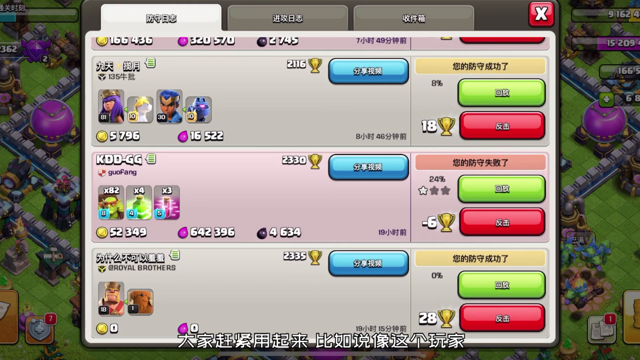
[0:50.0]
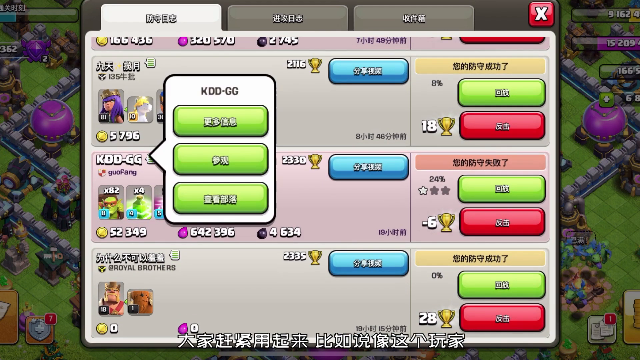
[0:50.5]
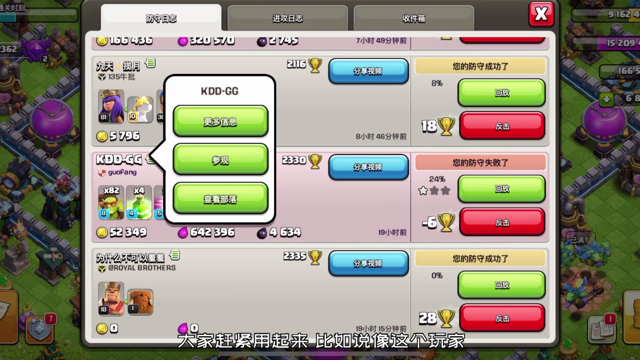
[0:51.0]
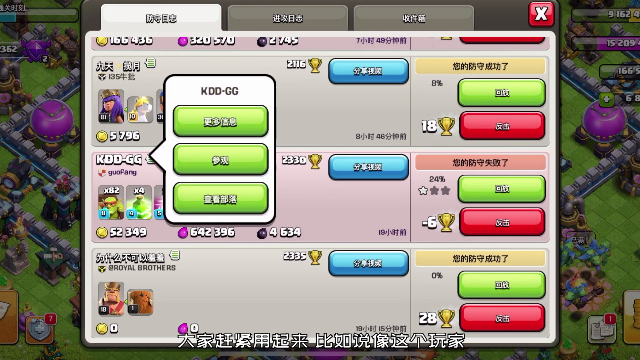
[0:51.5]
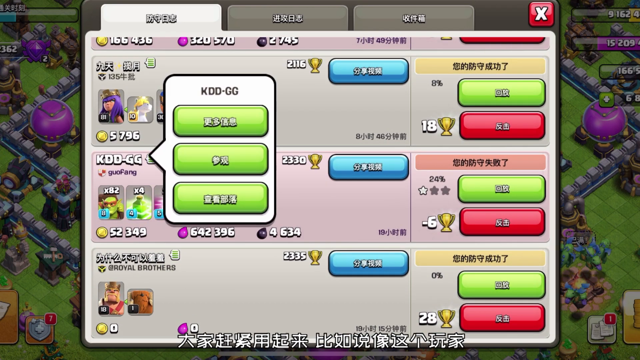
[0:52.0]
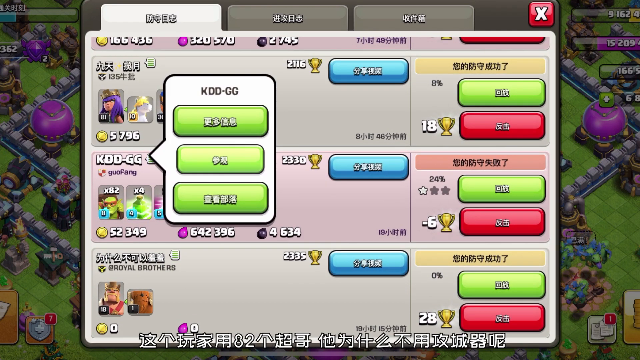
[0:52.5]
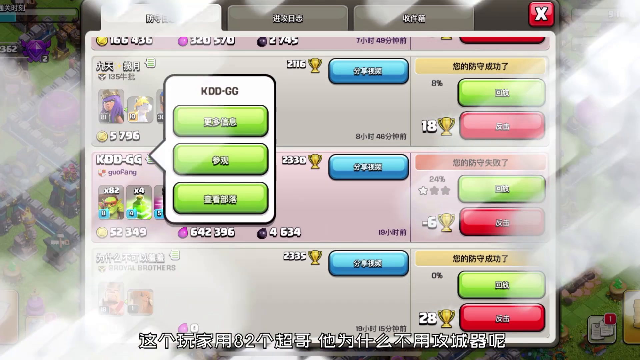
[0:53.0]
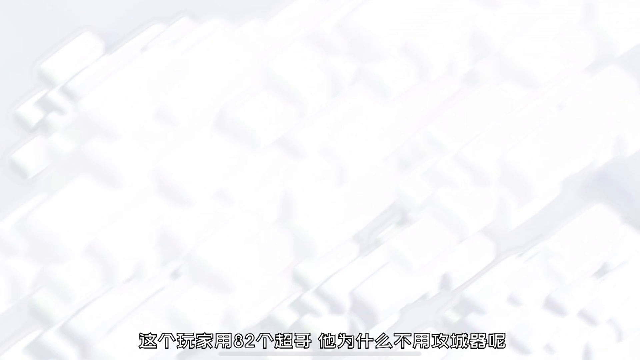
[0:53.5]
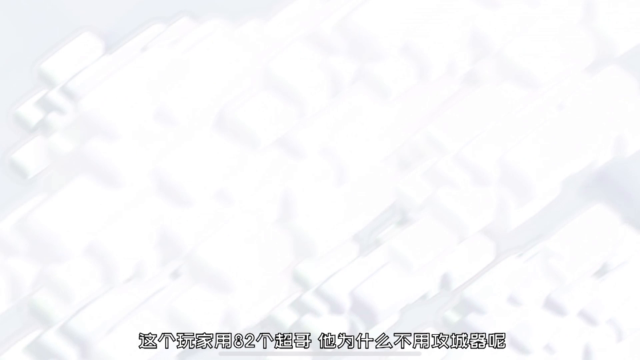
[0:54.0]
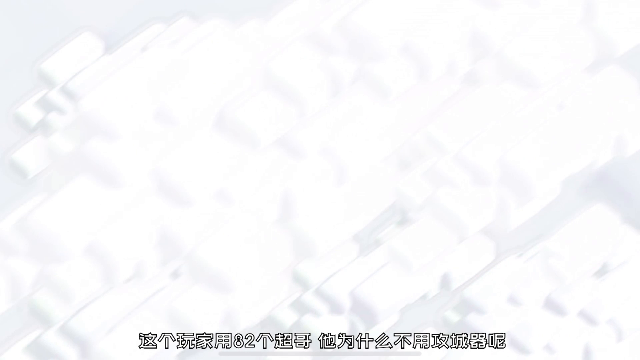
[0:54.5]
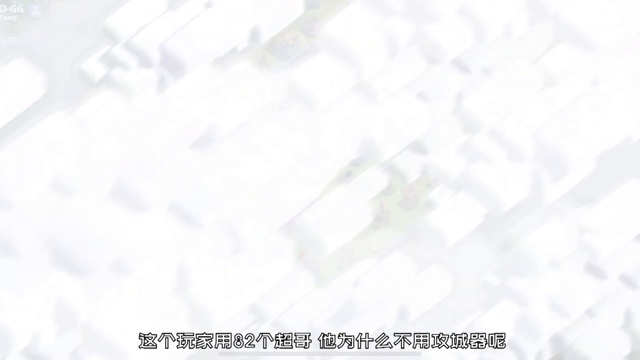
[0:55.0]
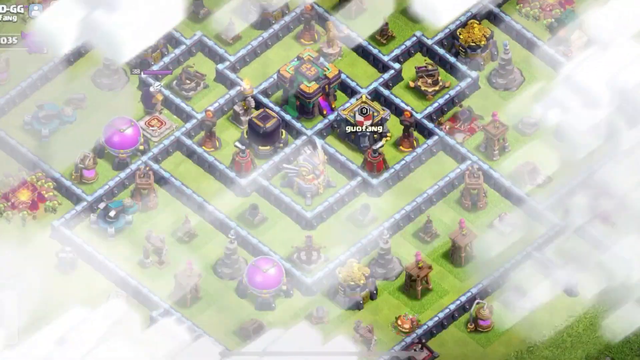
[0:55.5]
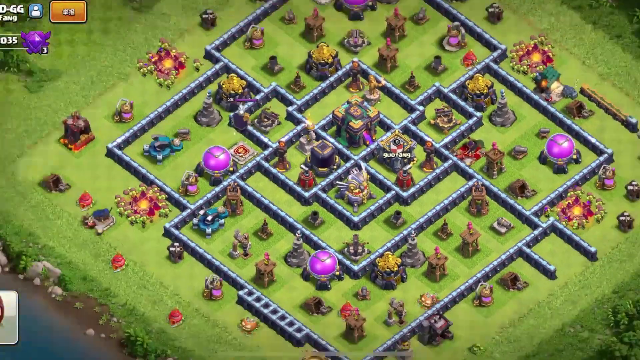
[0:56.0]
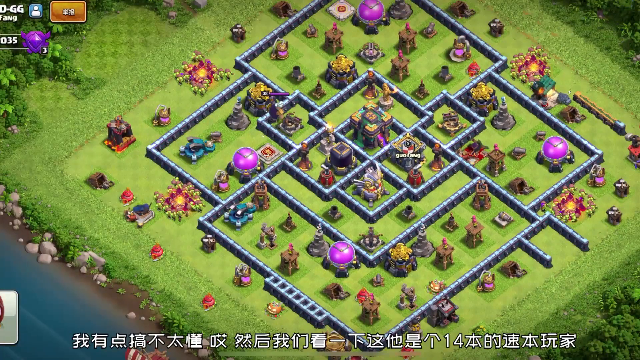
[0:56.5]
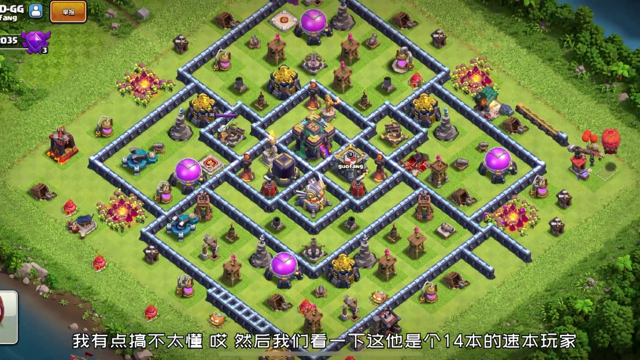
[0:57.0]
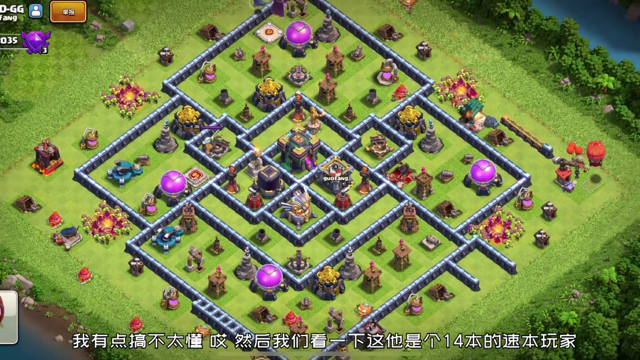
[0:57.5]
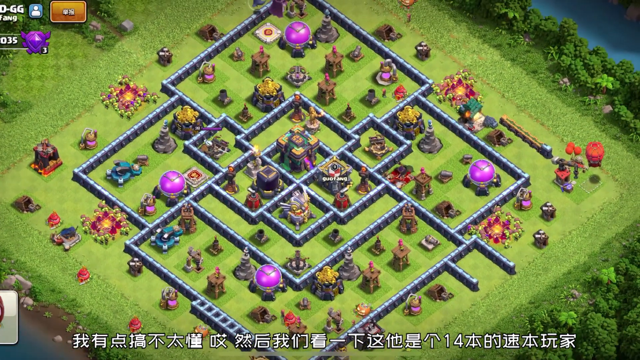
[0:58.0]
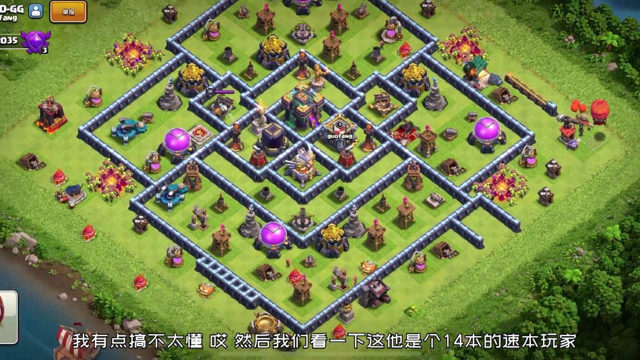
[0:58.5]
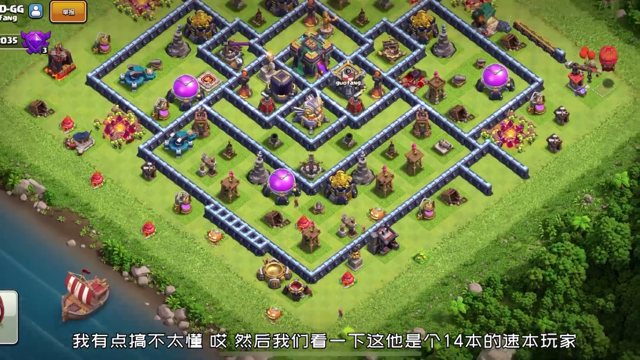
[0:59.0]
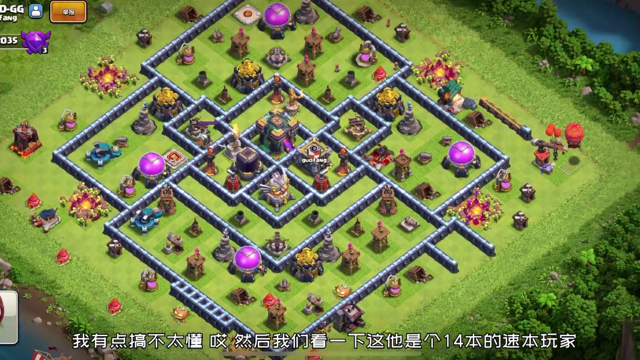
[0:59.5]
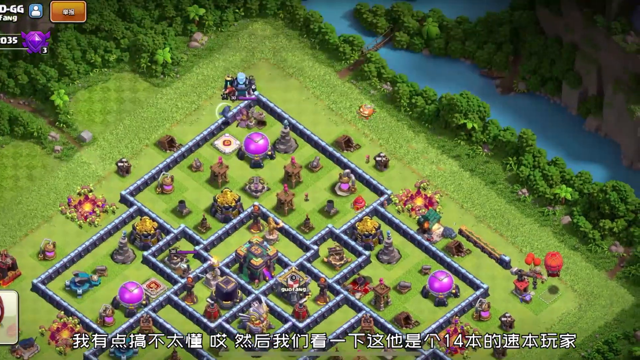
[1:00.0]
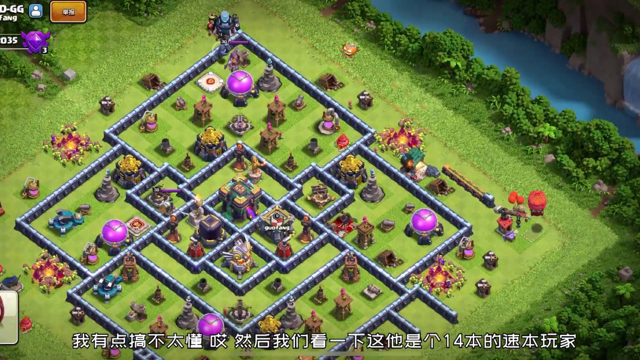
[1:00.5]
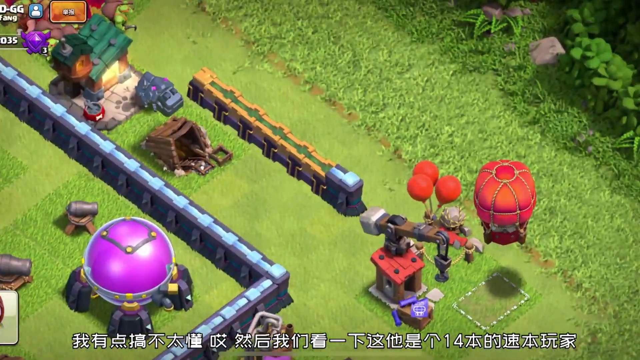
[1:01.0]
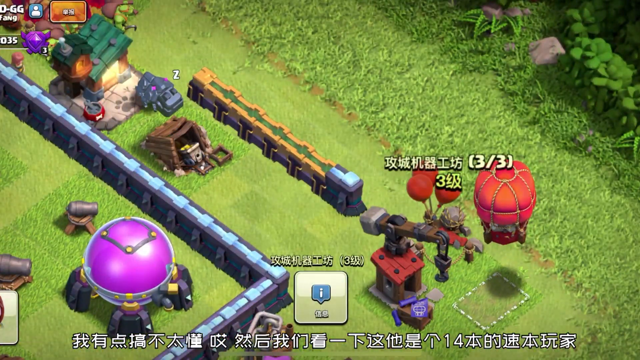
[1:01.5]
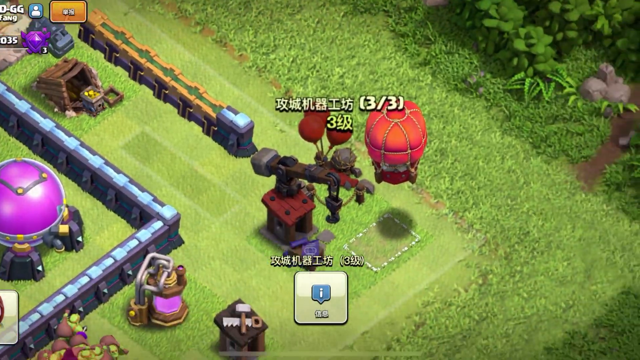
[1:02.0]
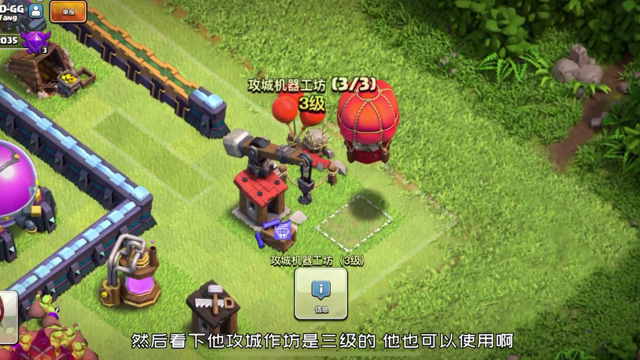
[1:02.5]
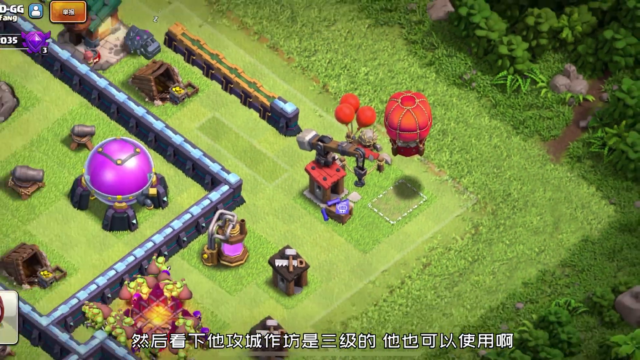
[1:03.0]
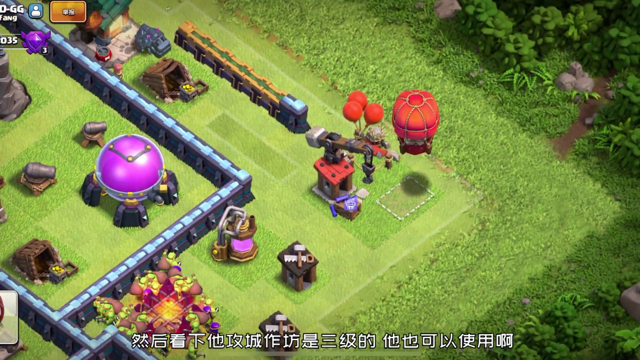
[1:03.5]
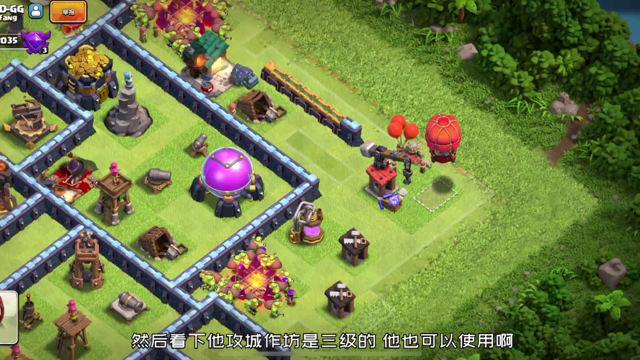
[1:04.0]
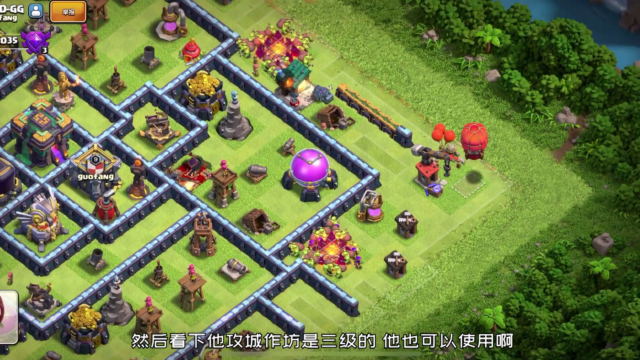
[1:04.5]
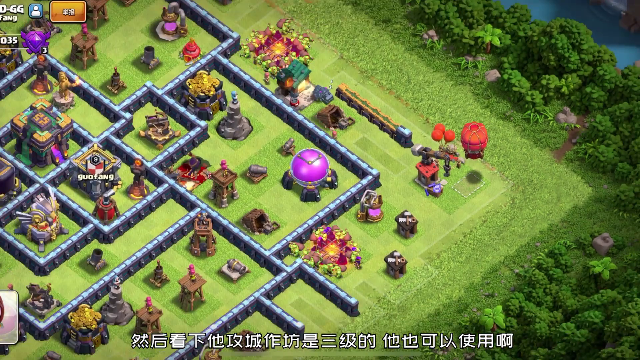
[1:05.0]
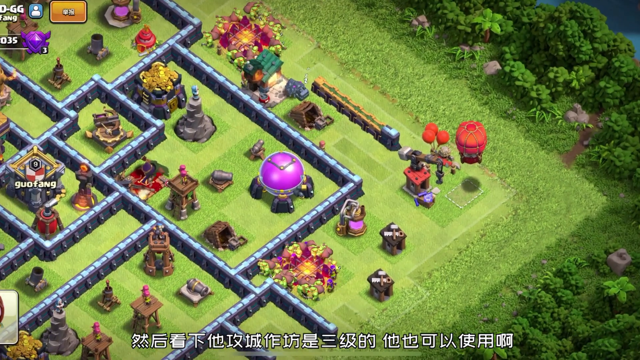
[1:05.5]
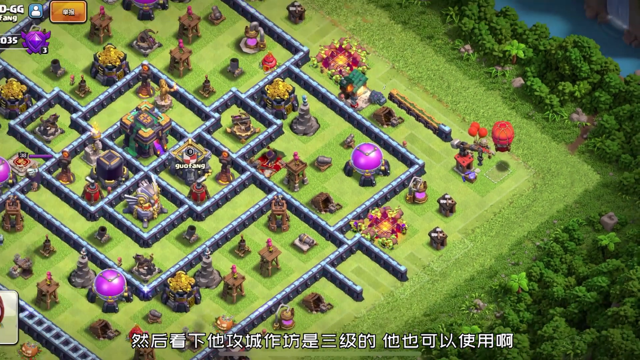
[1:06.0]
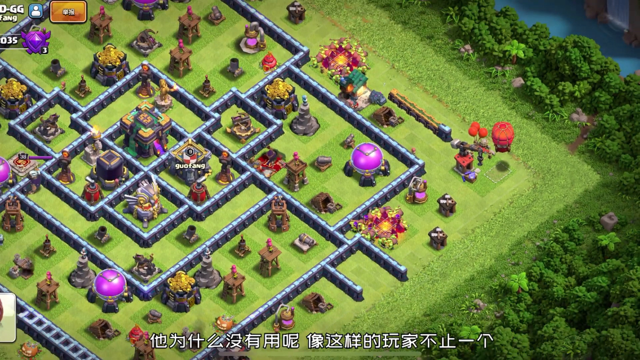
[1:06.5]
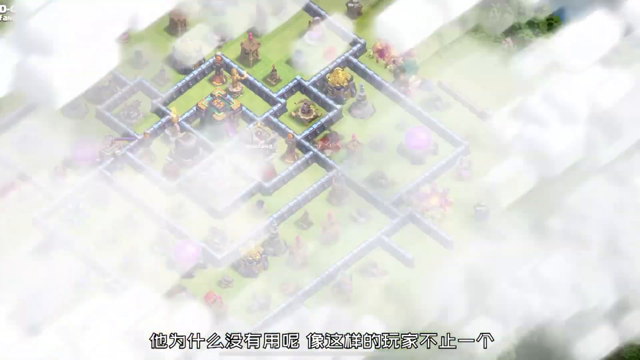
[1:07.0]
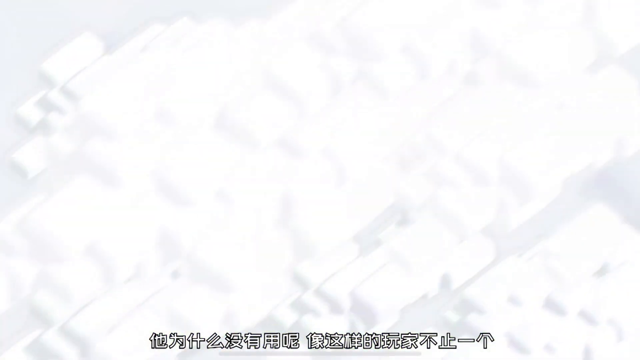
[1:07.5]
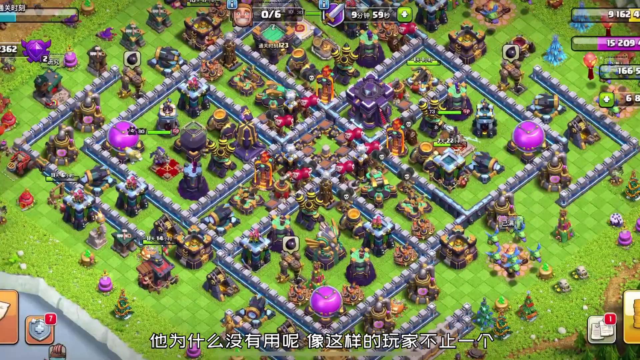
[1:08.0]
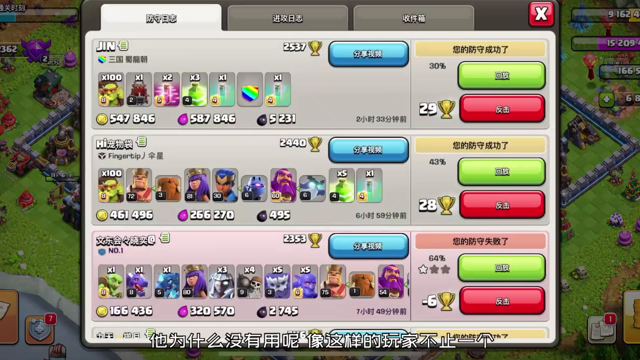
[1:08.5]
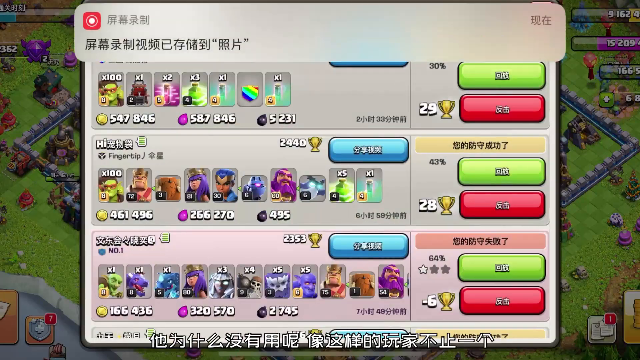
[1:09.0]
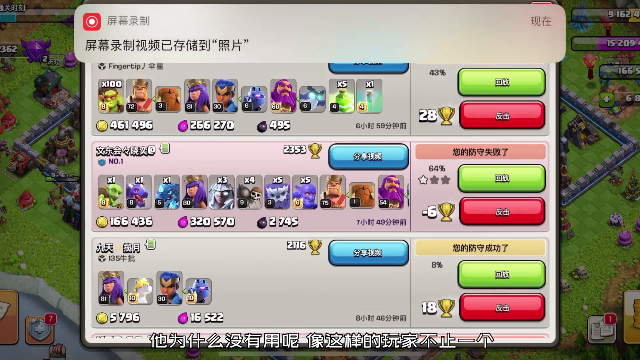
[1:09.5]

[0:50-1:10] A white screen with a cloud-like texture in white and light gray appears, then parts to reveal an aerial view of the same video game. The aerial view shows different boxes and shapes in dark gray or gray, with four purple globes at the corners of each box, all set within greenery with individuals around, and the entire centered view is visible. The view then zooms in to an object at the bottom right that has a lever with three balloons; it seems to be a construction-type material, and what seems to be a red mini hot air balloon right next to it casts a shadow on the ground. Some game figures seem to be walking toward it. Near the end the pop-up with the different symbols, colors and red and green buttons appears again, followed by the white and light gray cloud-like screen. Throughout, figures walk around the game environment among different symbols and activity.